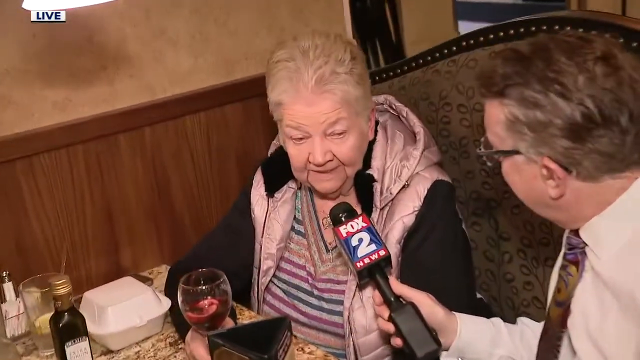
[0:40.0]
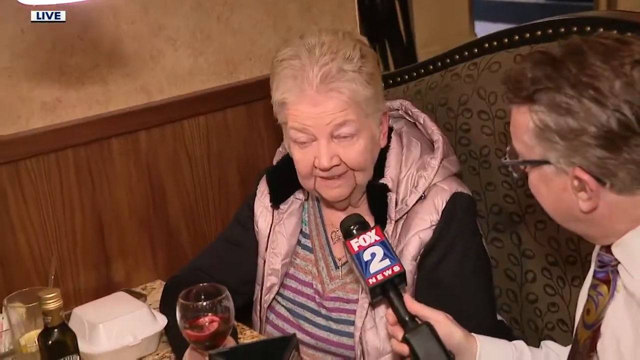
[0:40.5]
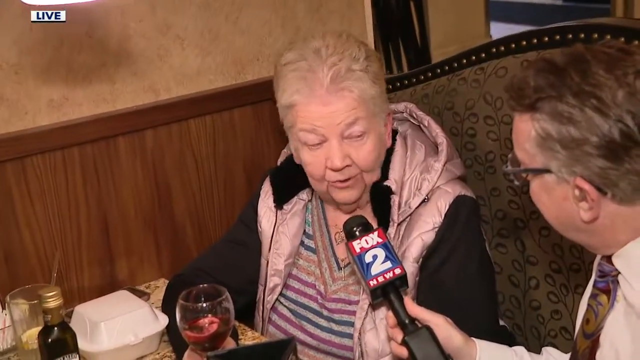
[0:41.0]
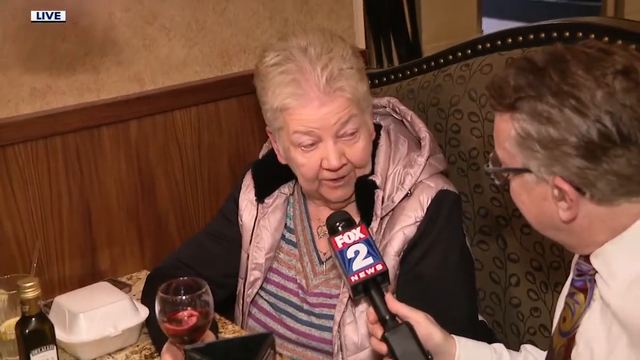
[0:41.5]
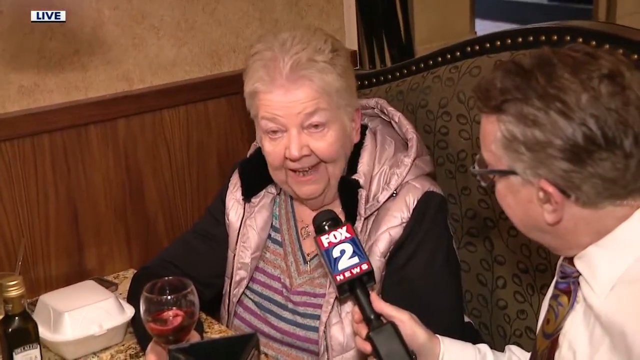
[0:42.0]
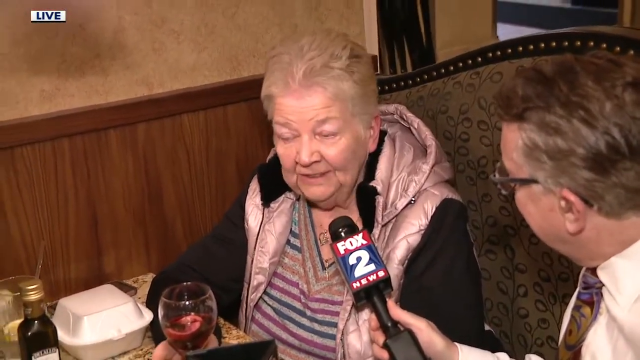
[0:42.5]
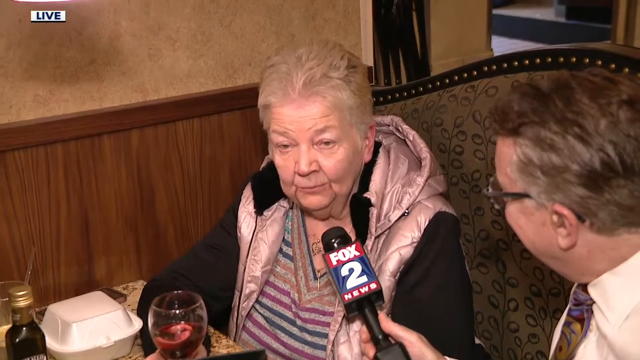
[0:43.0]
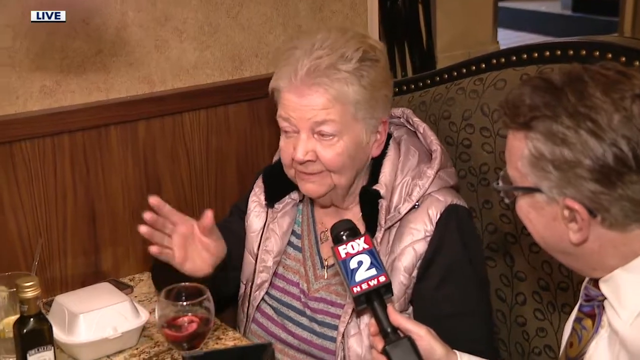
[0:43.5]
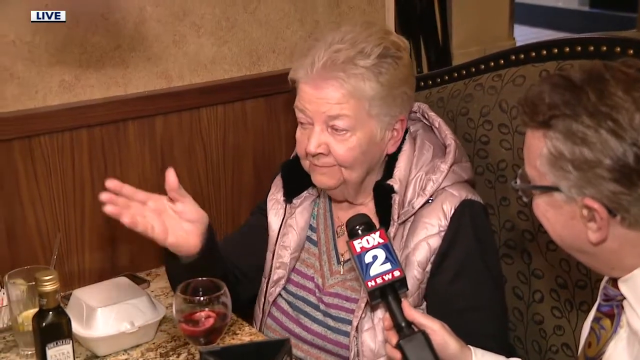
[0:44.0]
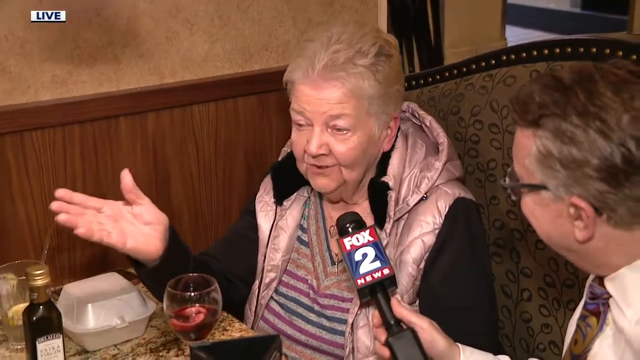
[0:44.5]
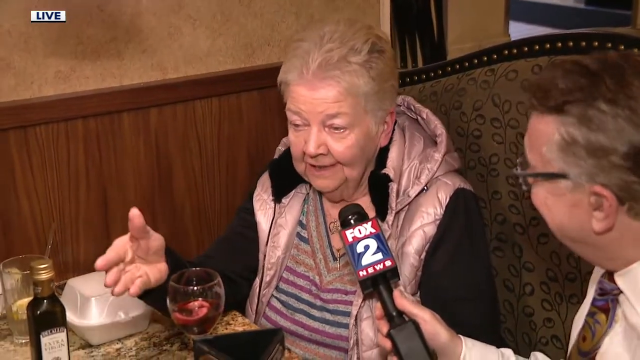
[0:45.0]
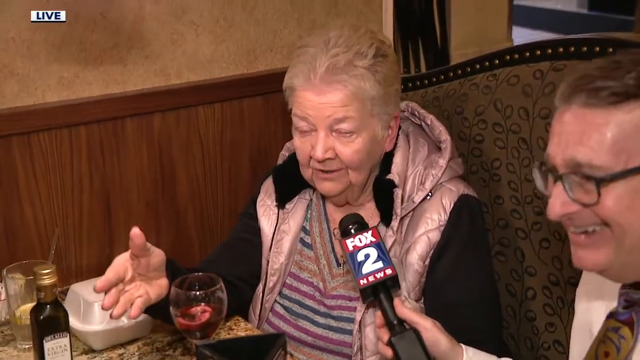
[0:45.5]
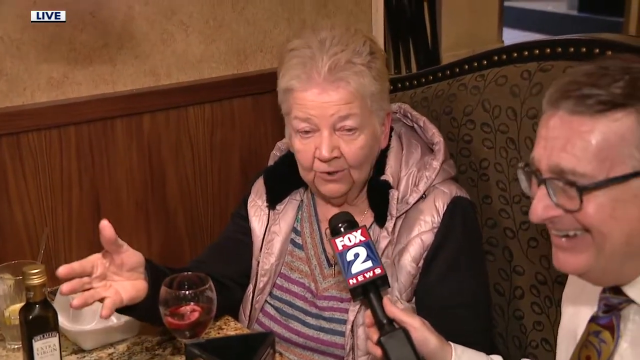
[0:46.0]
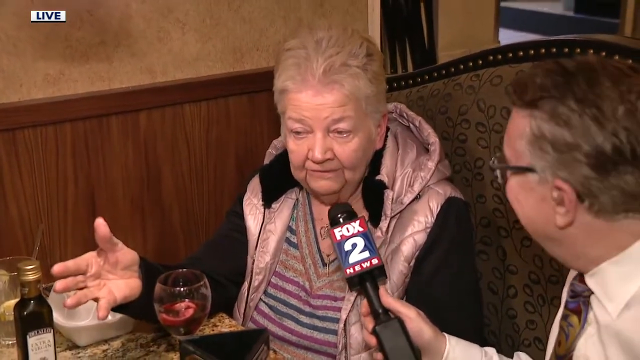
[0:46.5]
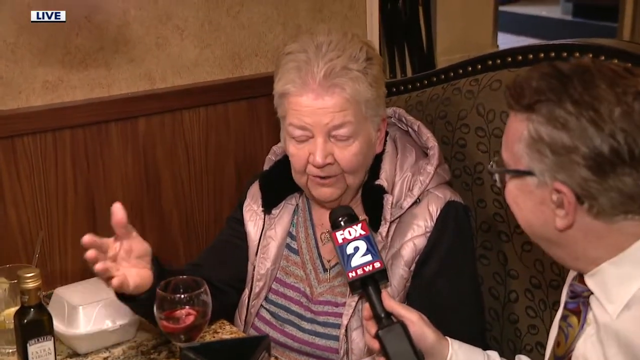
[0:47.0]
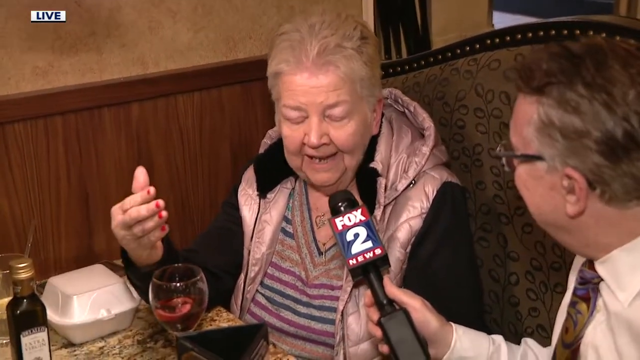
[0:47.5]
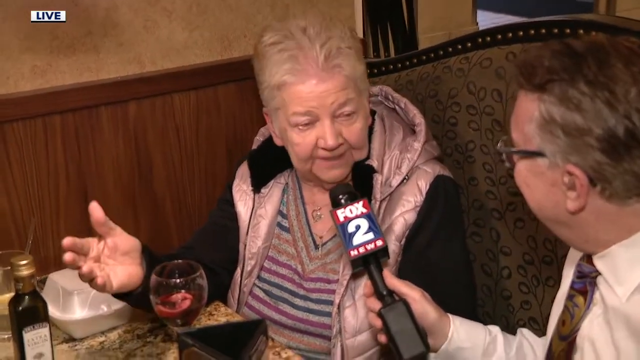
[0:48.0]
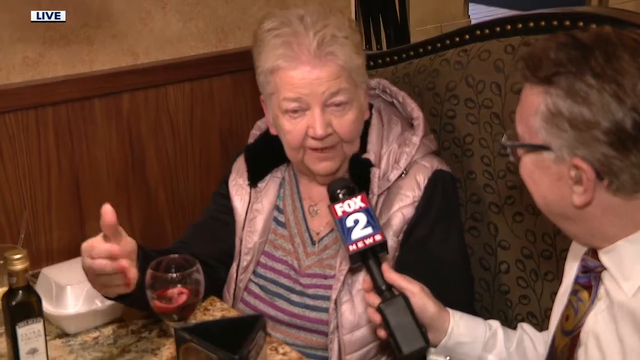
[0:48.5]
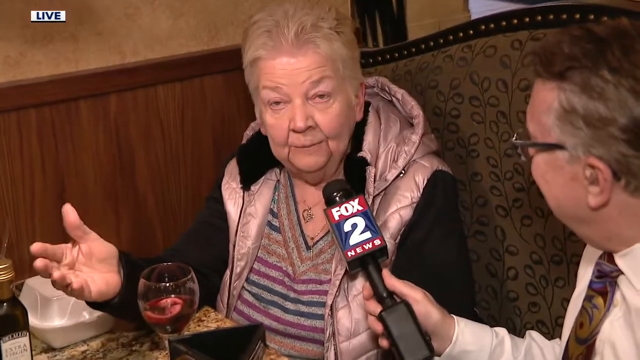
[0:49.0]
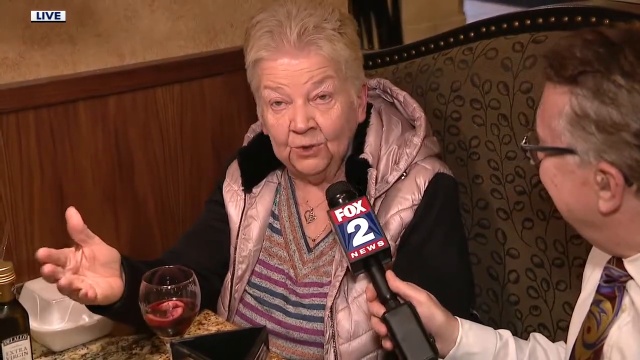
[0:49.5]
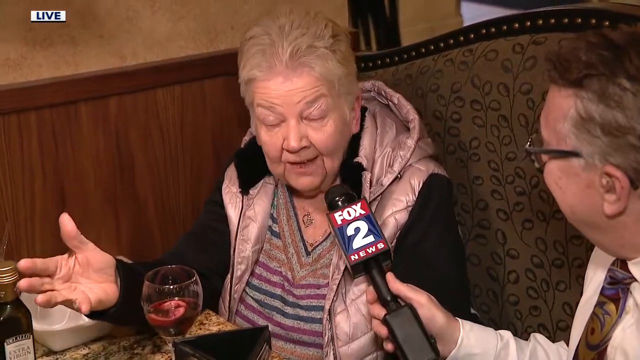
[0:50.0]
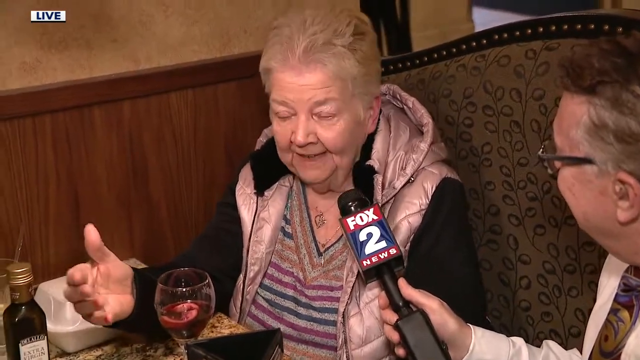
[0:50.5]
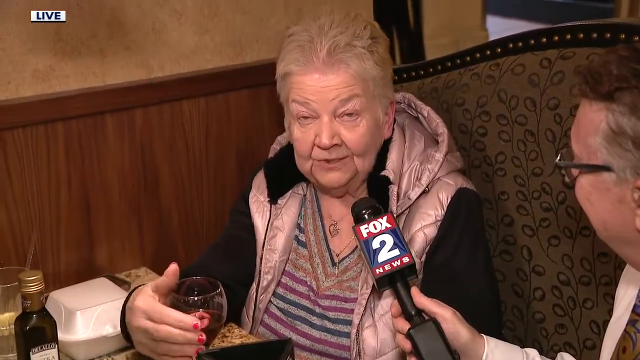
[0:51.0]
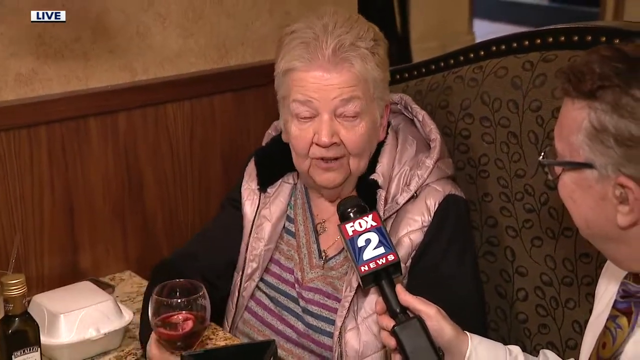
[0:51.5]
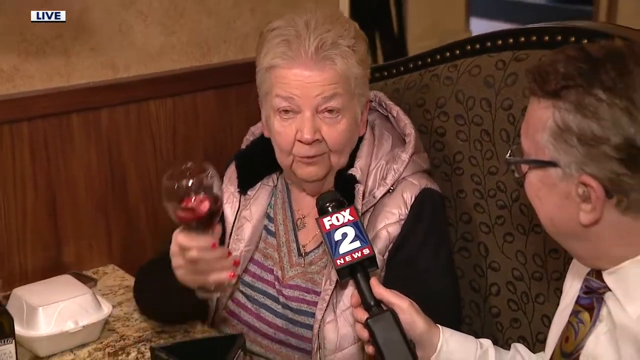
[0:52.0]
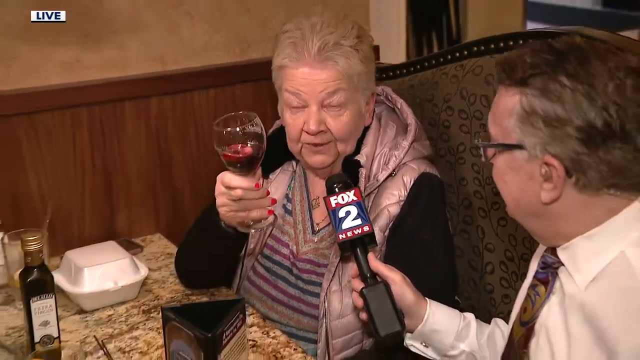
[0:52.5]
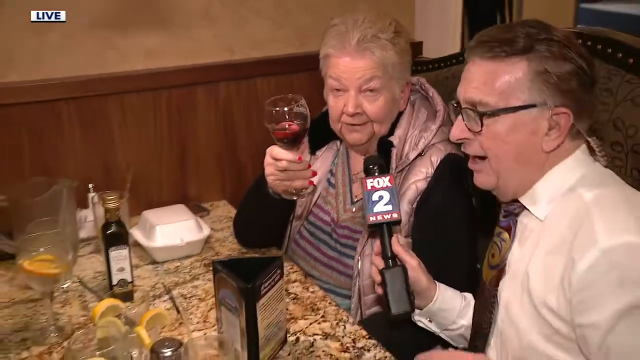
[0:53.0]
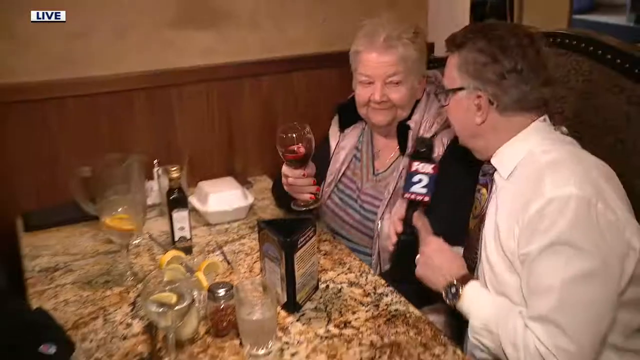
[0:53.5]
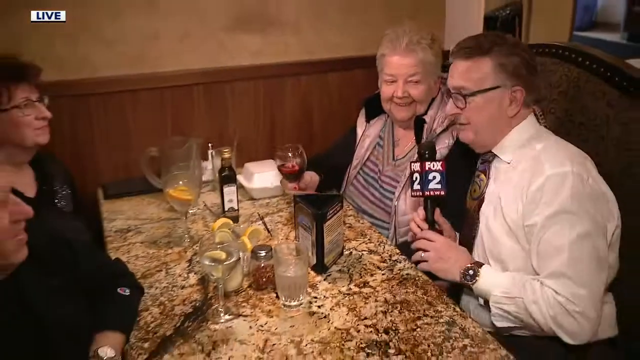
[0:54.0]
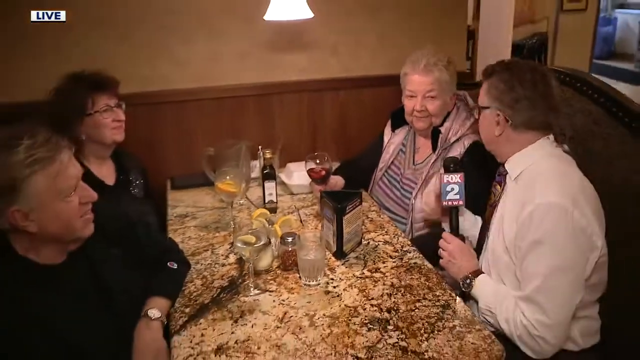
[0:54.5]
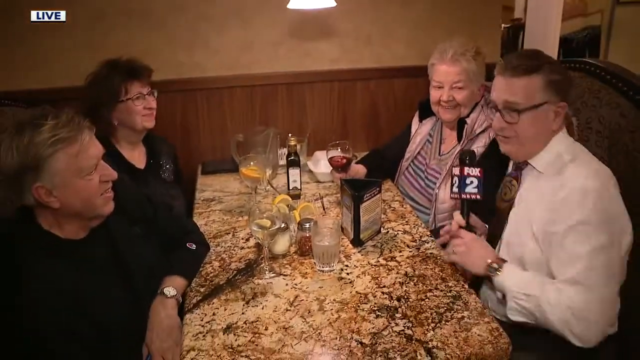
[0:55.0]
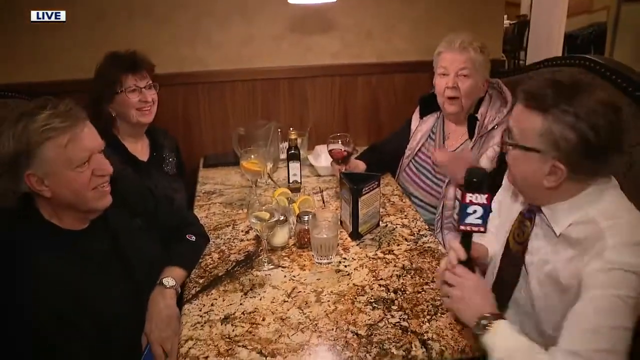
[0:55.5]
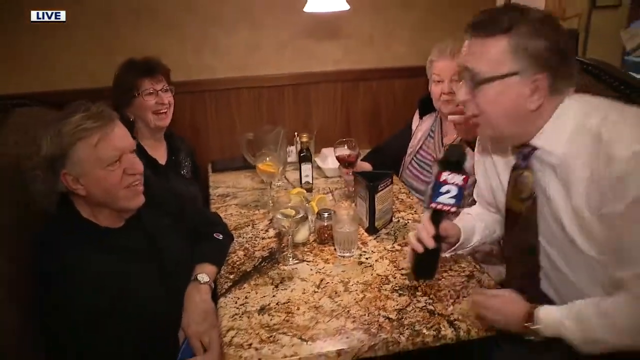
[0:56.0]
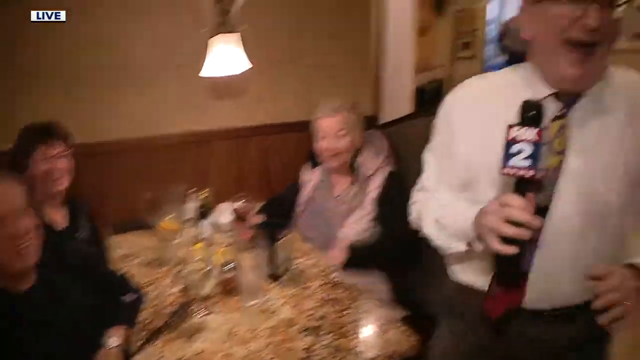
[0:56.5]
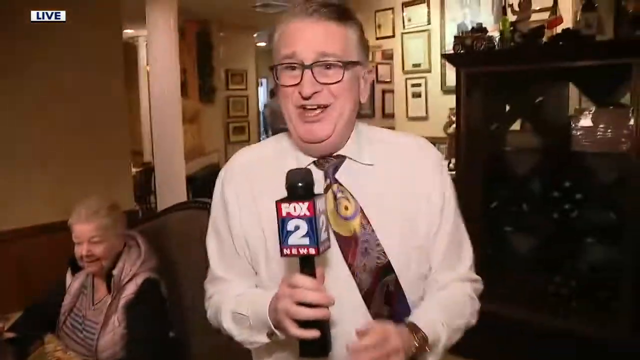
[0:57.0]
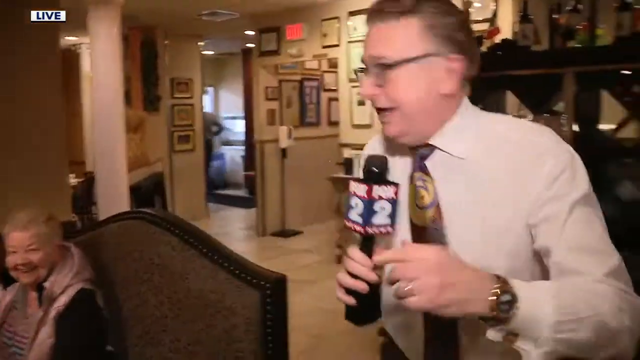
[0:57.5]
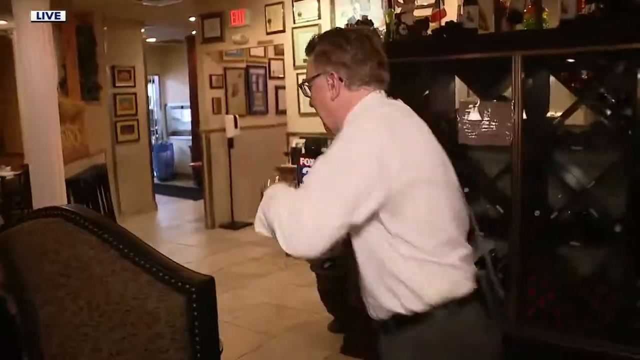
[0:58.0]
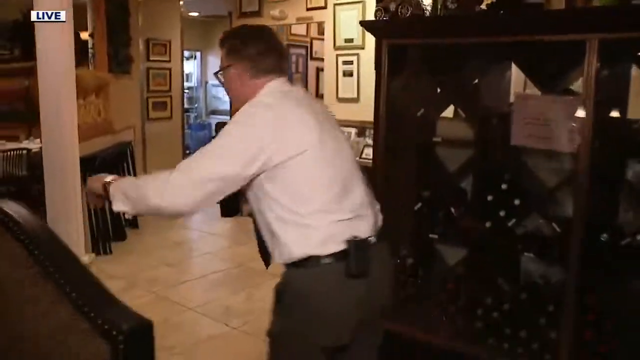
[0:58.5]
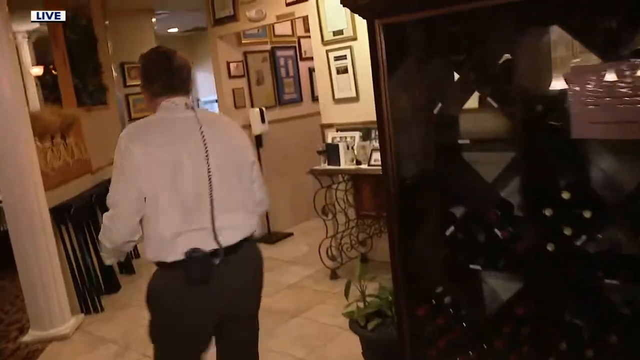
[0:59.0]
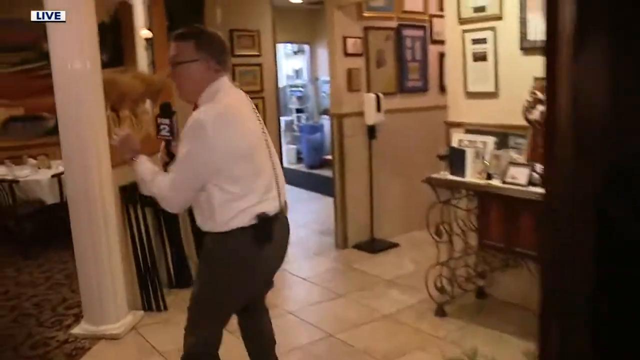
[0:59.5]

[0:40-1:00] The woman he is asking is older, with mostly white-blonde hair that is short and neatly combed. She wears a jacket and a striped shirt. The booth they sit in has floral upholstery with some gold beading along the edge. The top part of the wall is beige wallpaper and the bottom half is wood panel. As she talks, she acknowledges her friends and uses her right hand to talk. Her glass appears to hold red wine, and a bottle of the wine is on the table. The enthusiastic reporter shoots up off the booth and scrambles down the hall toward the back. Many plaques hang on the walls of the restaurant, and some type of memorabilia or knickknacks hang on the left side, apparently some frills, leather tassels and white, kind of poofy-looking objects.